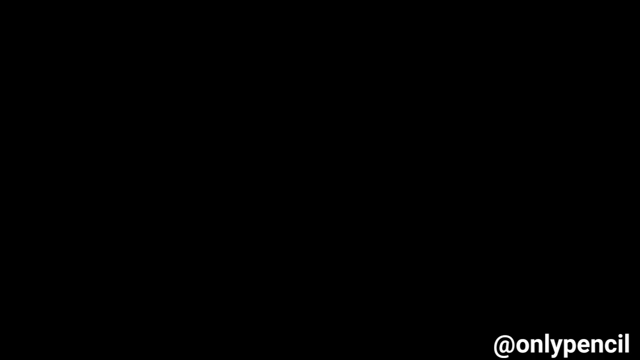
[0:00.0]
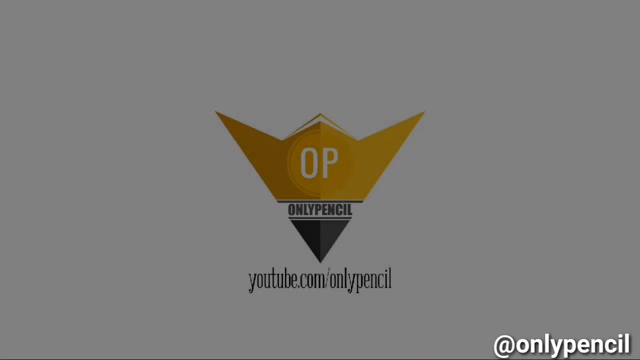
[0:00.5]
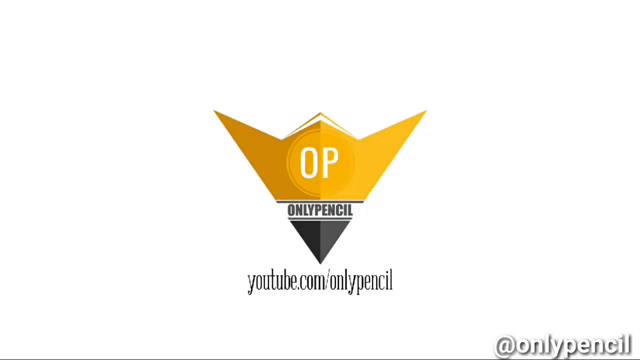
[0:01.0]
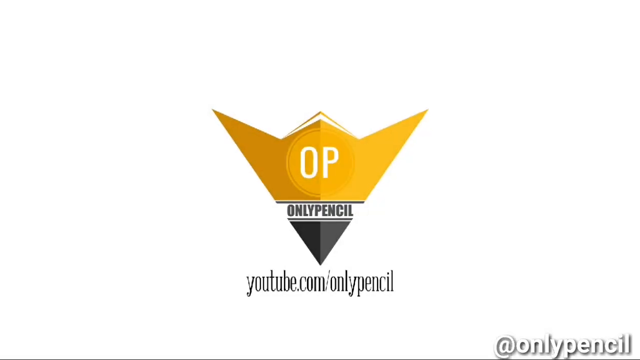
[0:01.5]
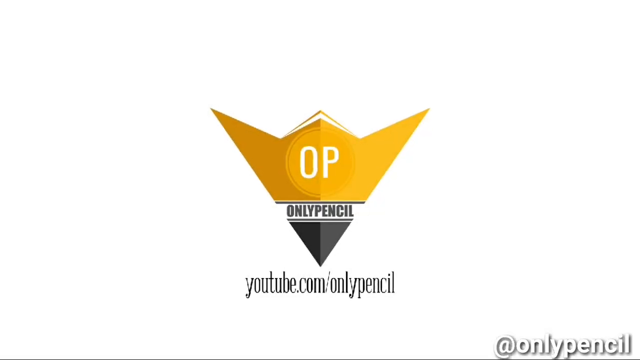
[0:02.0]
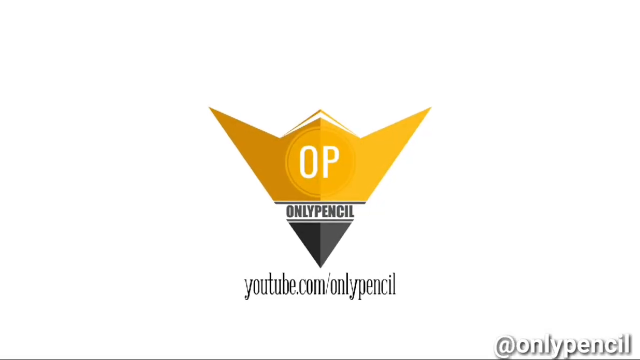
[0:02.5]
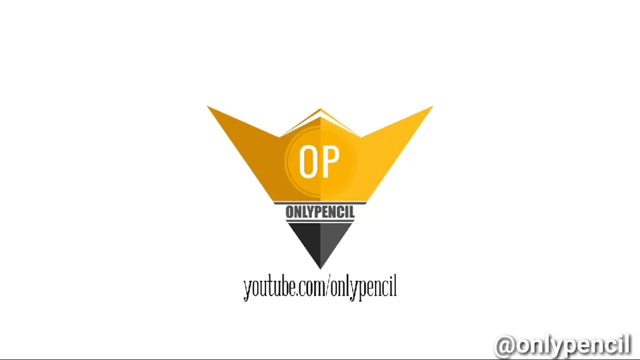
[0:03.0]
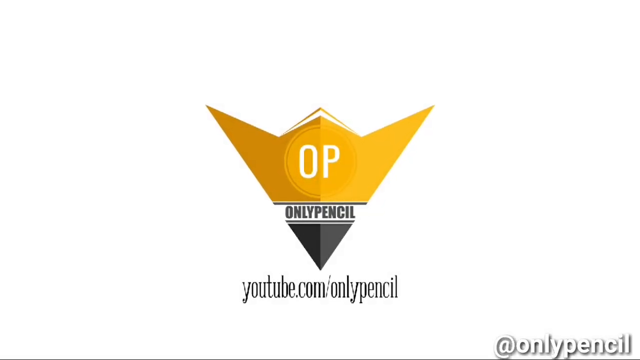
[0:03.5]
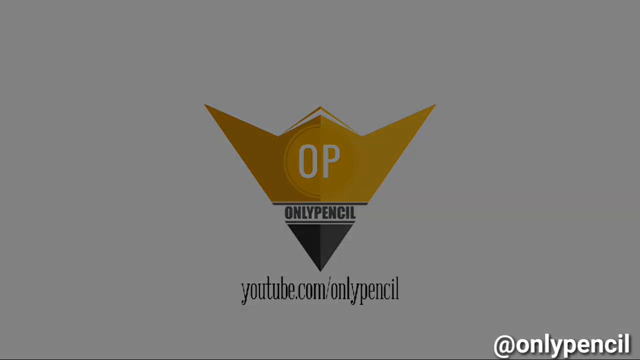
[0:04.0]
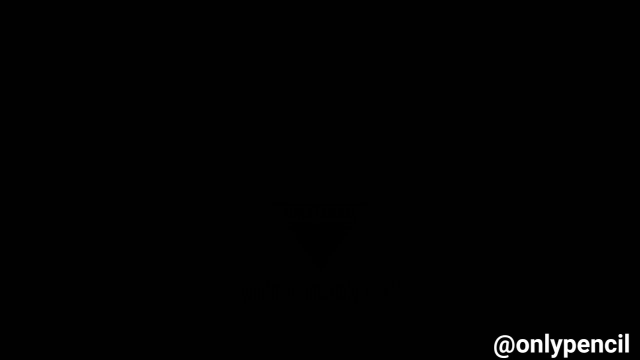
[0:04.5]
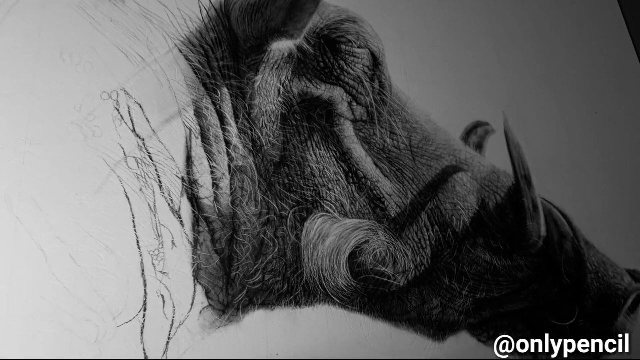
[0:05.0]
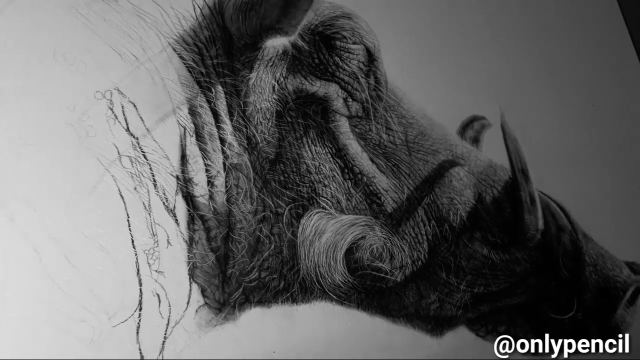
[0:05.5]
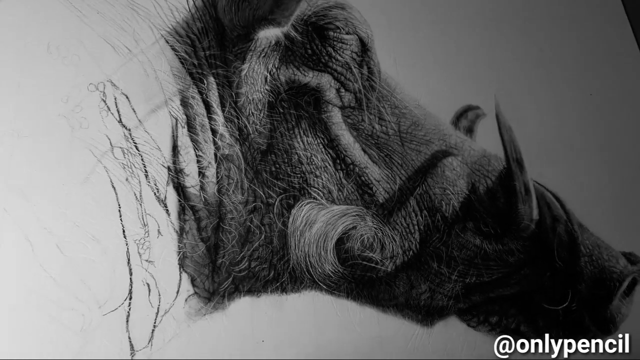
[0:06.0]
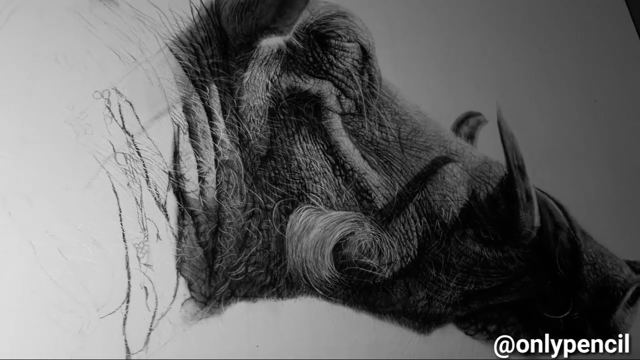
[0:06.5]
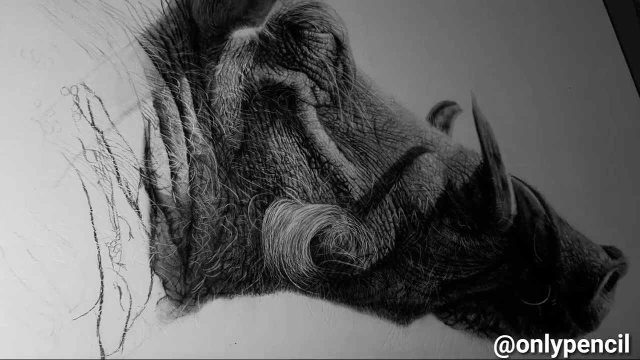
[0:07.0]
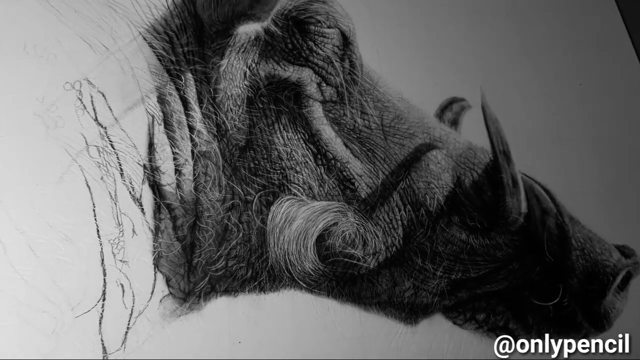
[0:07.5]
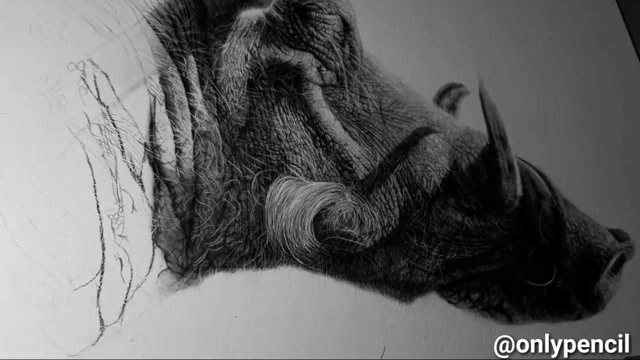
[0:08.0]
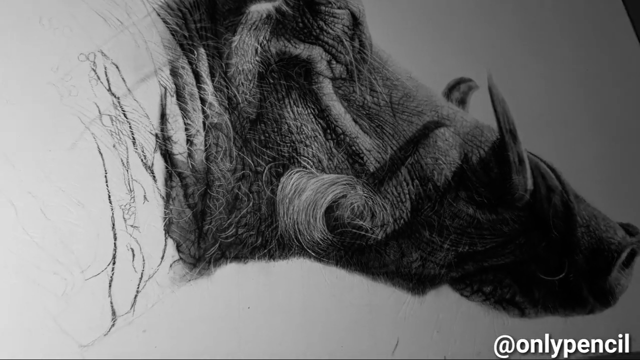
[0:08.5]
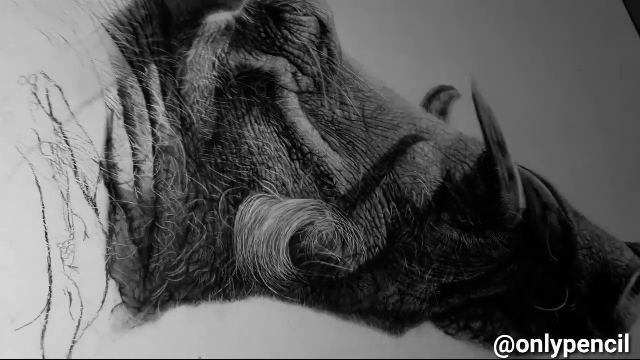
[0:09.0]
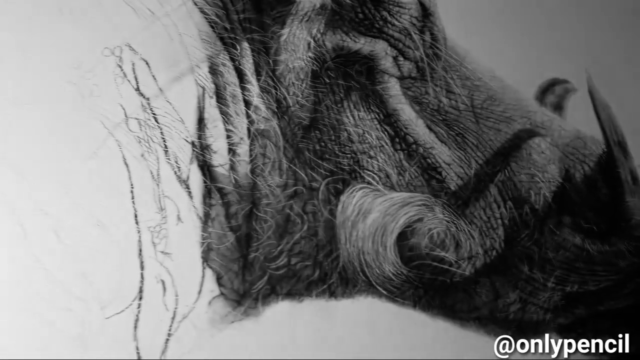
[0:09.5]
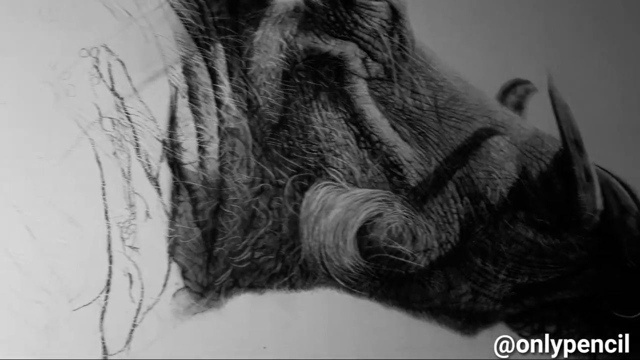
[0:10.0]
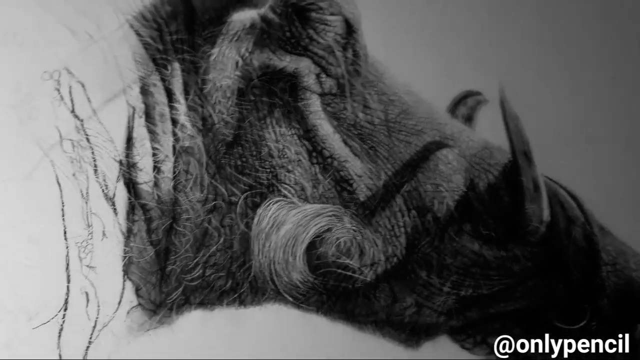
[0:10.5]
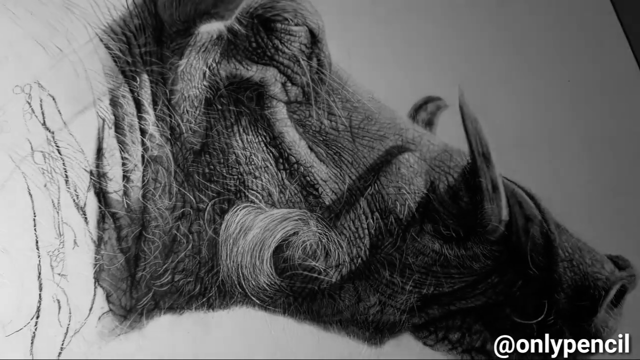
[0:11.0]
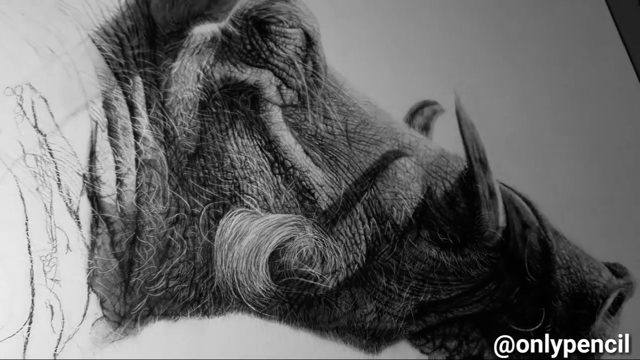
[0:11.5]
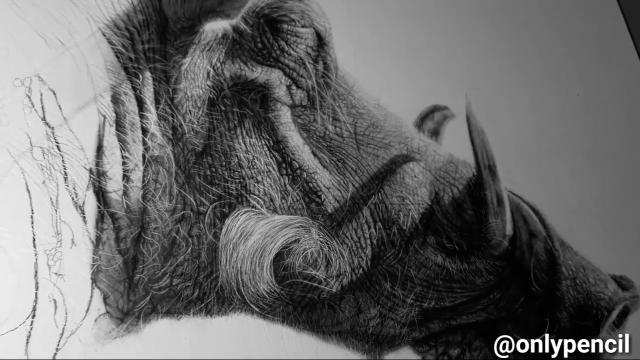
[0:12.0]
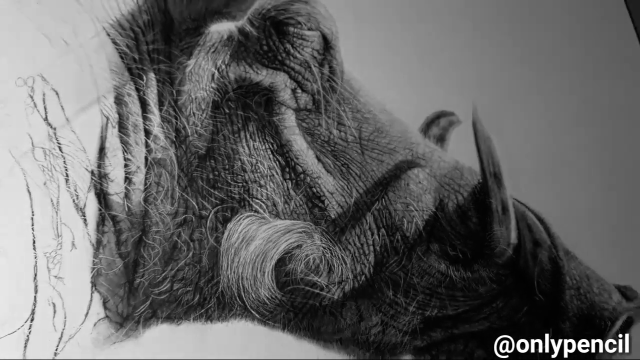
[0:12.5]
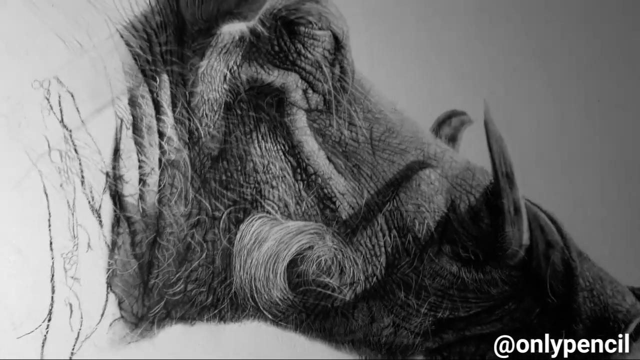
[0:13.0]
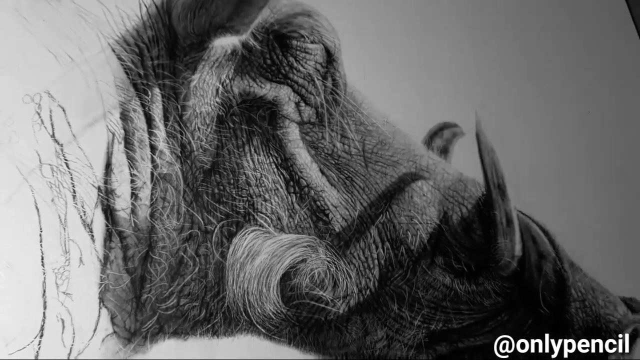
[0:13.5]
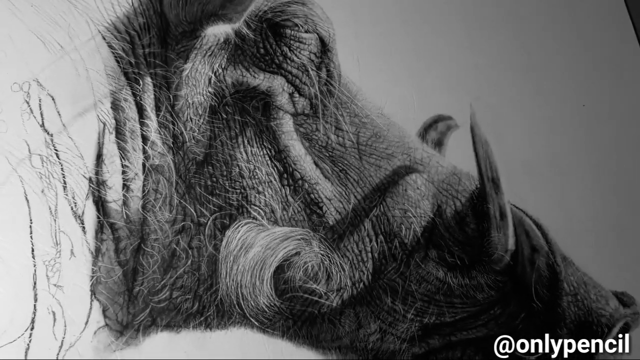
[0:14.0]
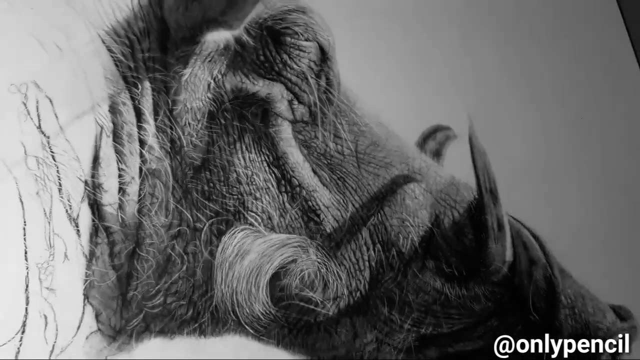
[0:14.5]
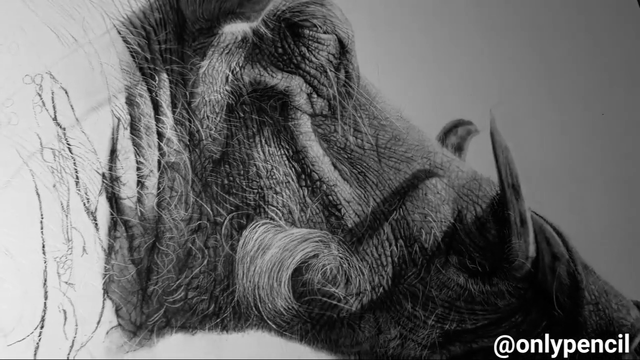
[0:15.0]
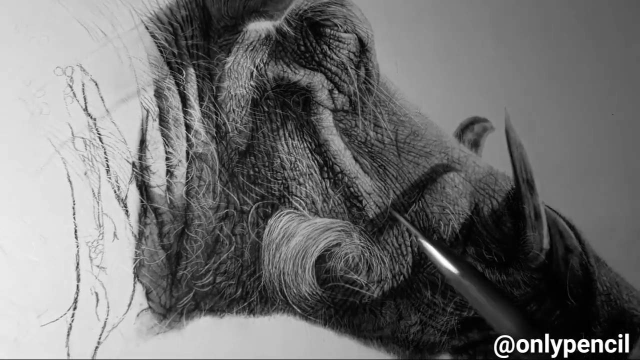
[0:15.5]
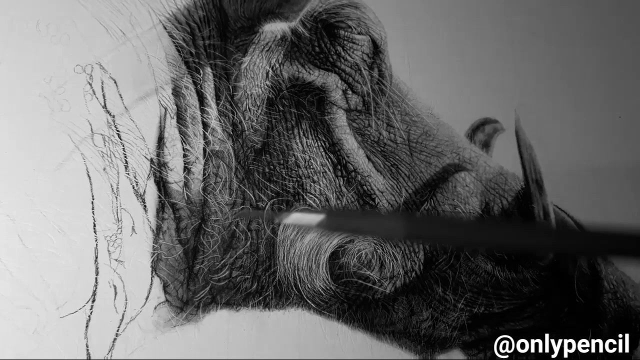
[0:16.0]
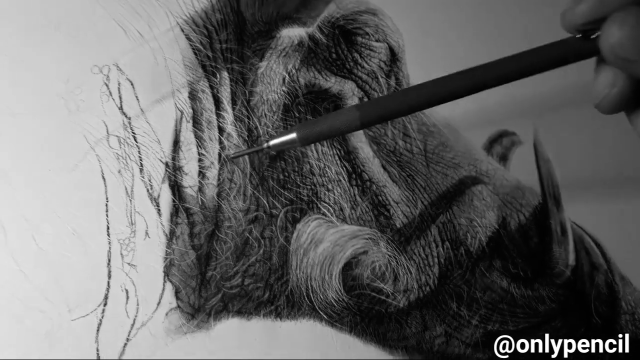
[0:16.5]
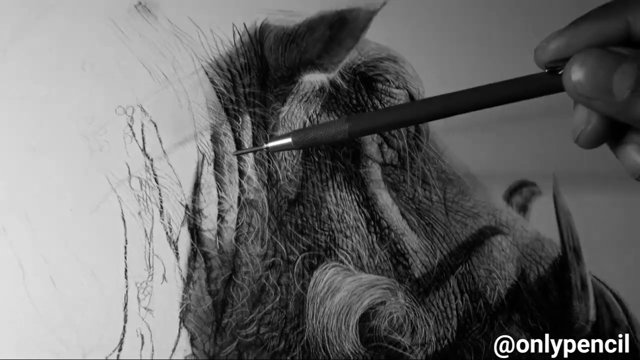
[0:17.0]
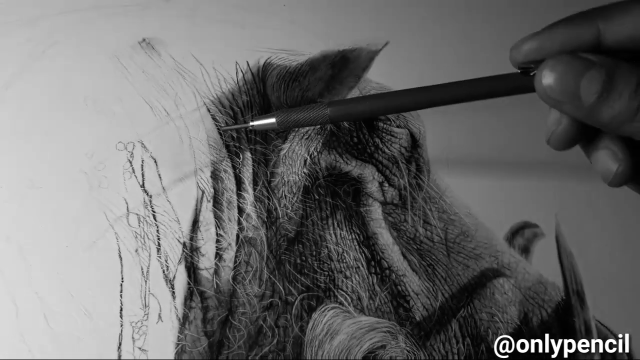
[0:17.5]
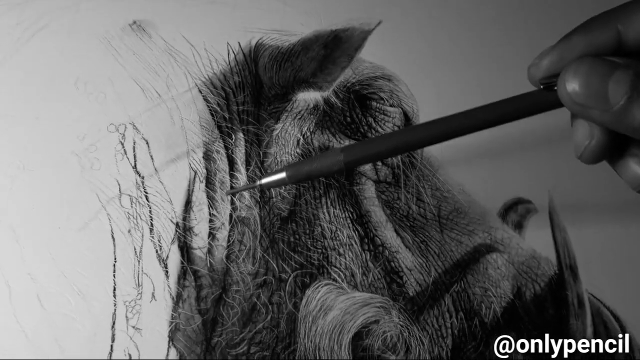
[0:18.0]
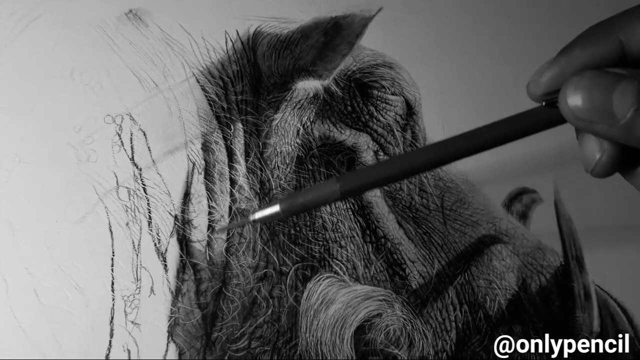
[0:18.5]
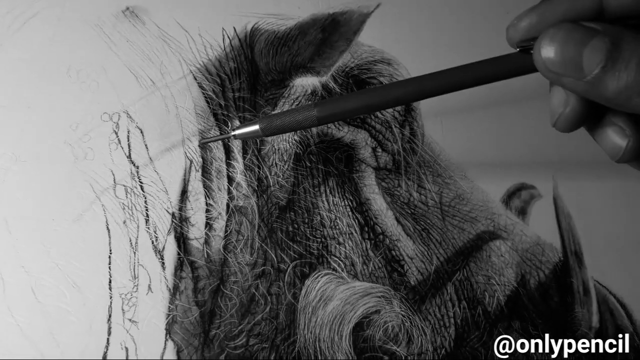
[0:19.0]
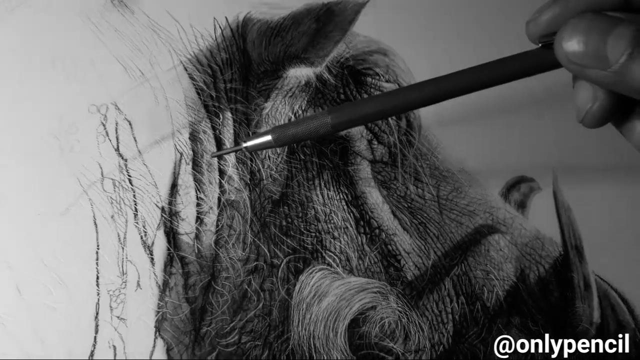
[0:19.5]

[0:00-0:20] The video opens on a white background with a shape in the center that is almost a triangle, except that its top edge goes down from the left, up to the center, down again and up to the right side, like a very spread-out W. In the center of it, in white, is "OP". Below the yellow top portion there is a small white gap with black text reading "only pencil", and the bottom half of the shape is gray. Below it is the YouTube link, and in the bottom left corner there is text that says "only pencil". Next comes a drawing of the head of a boar facing to the right. It has two big horns coming off the side of its nose and pointing up. The area from over the top of the nose back to just behind the ear is shaded in, while the neck and upper haunches are not shaded yet. The camera moves around somewhat and zooms in a little toward the eye, which is closed; the ear hangs down, and the drawing has fine hair and texture. A pencil comes in just behind the neck area and points at a couple of places that have not been completely shaded in.